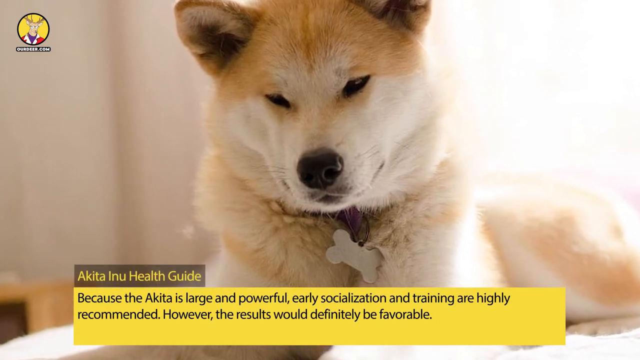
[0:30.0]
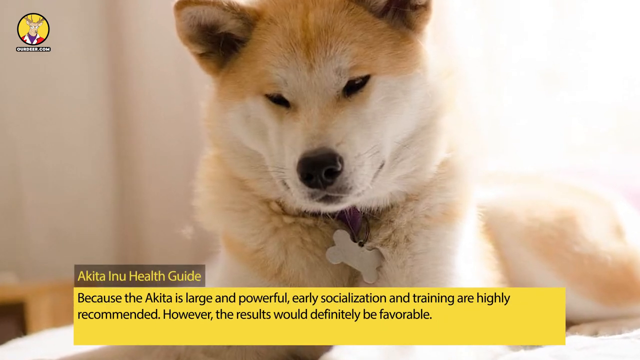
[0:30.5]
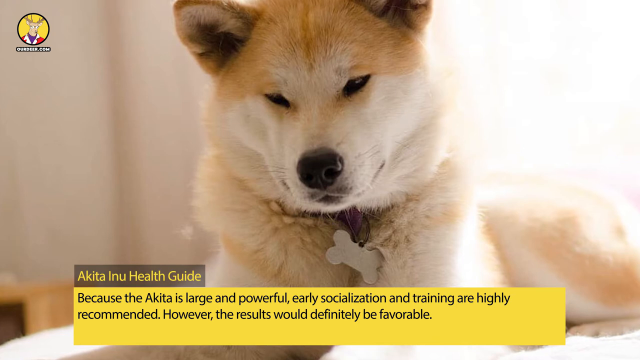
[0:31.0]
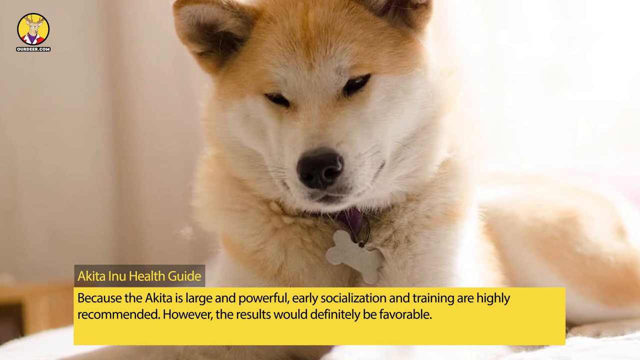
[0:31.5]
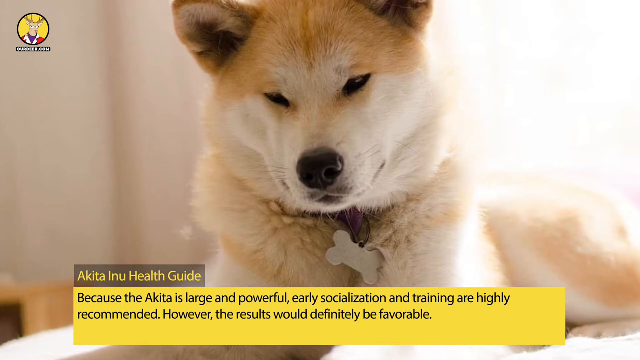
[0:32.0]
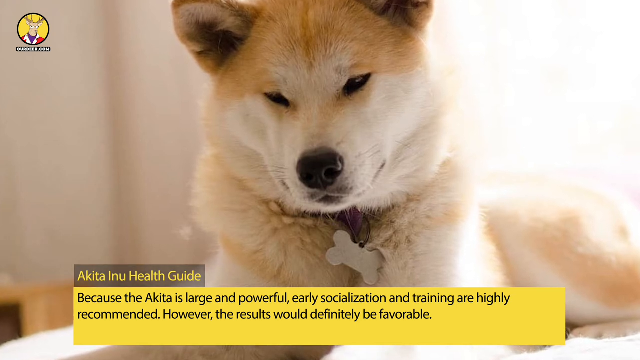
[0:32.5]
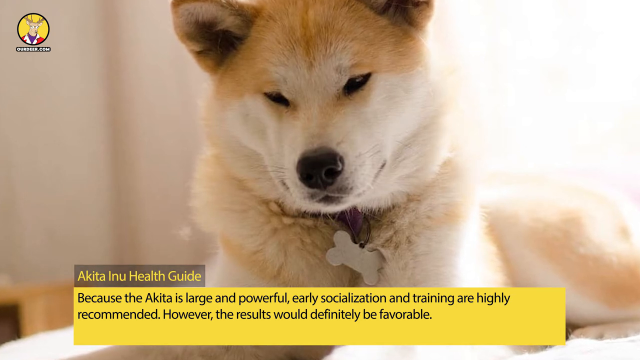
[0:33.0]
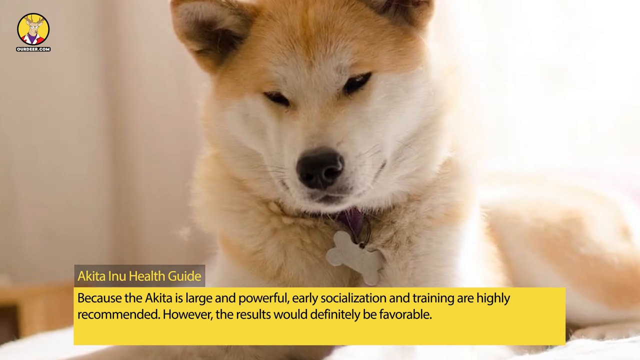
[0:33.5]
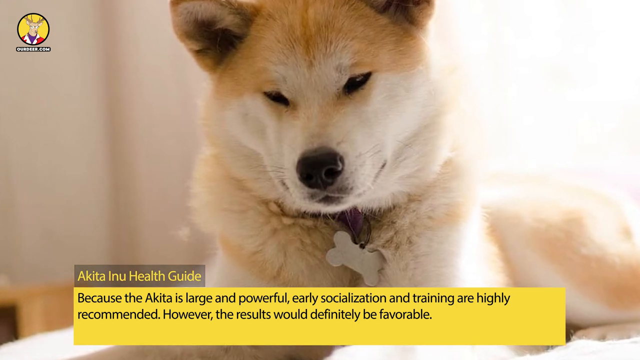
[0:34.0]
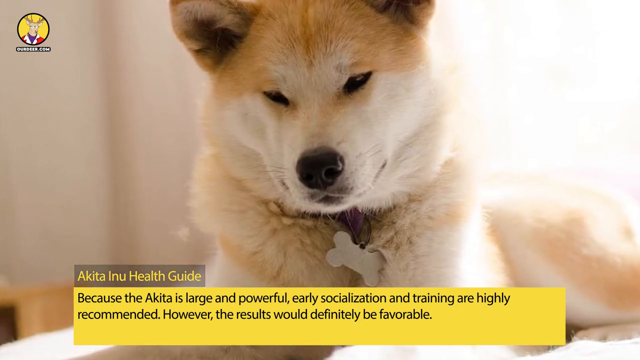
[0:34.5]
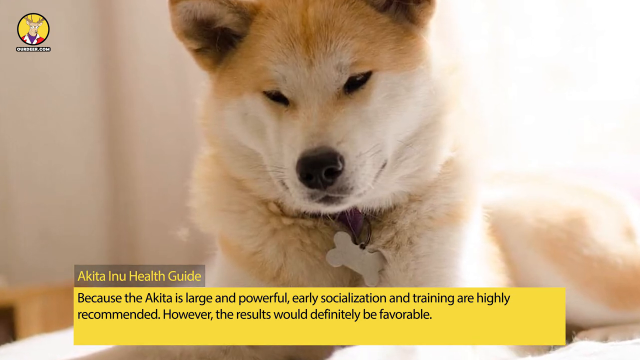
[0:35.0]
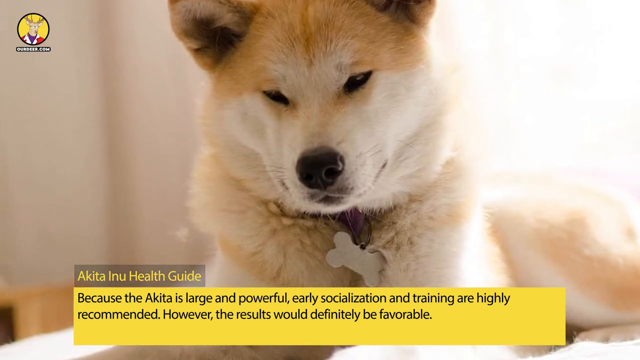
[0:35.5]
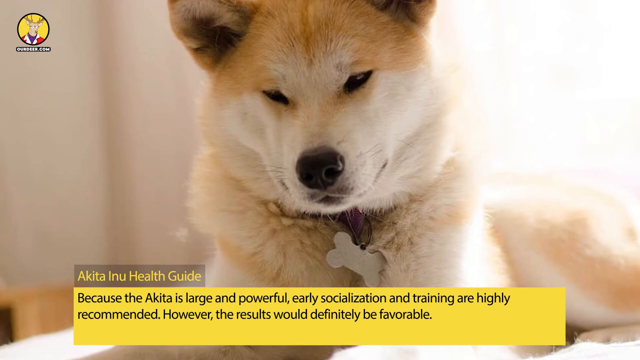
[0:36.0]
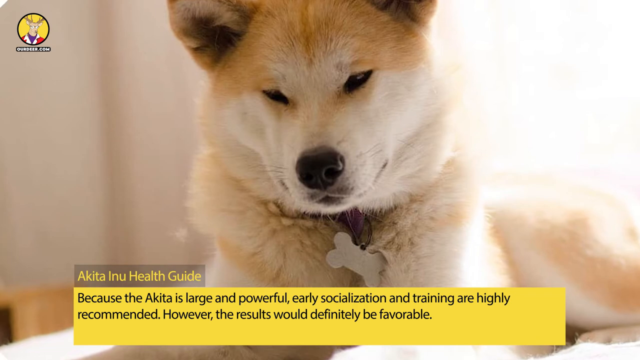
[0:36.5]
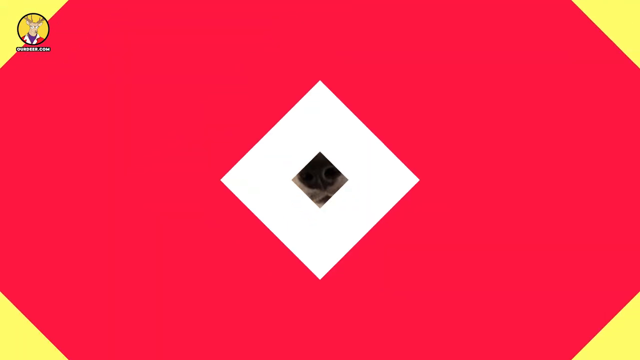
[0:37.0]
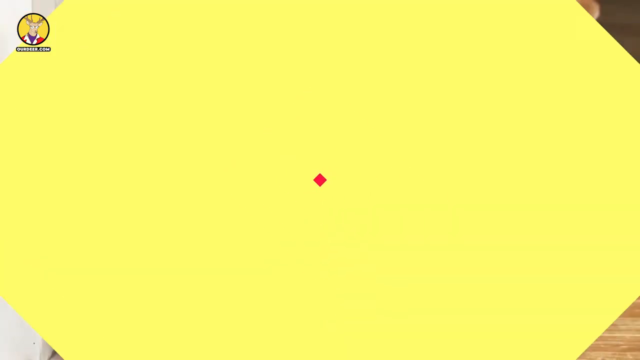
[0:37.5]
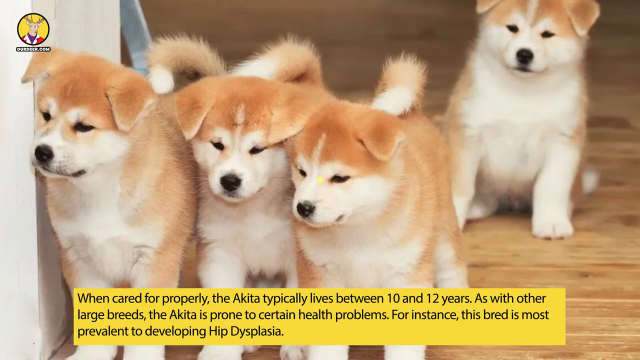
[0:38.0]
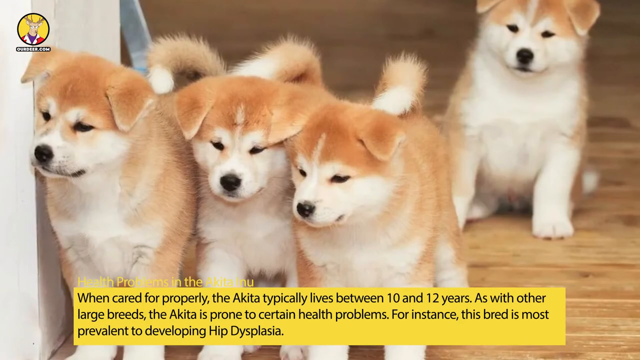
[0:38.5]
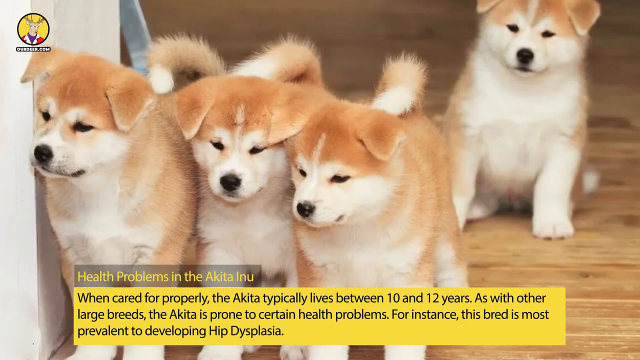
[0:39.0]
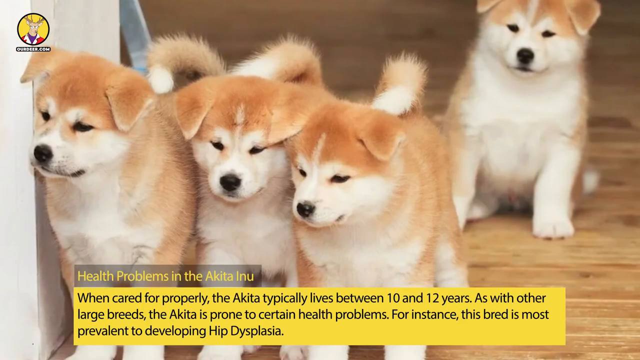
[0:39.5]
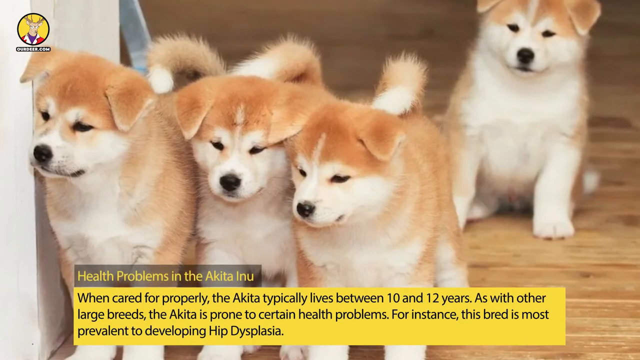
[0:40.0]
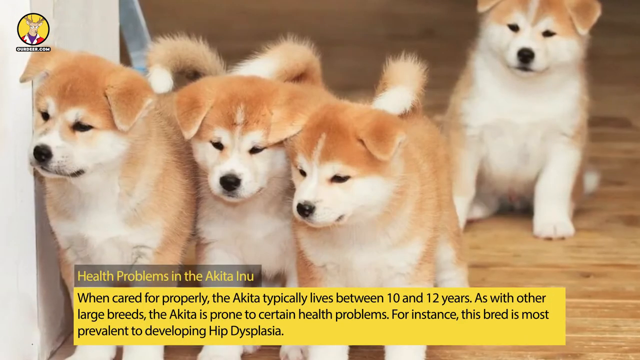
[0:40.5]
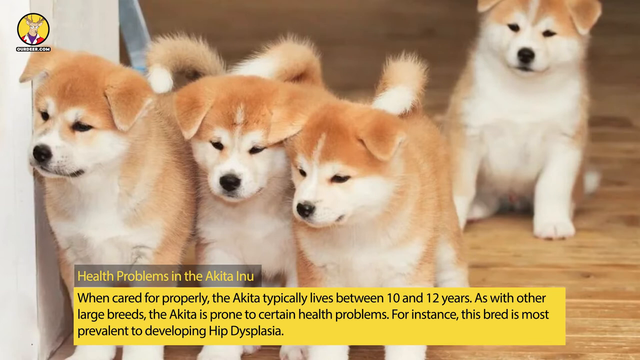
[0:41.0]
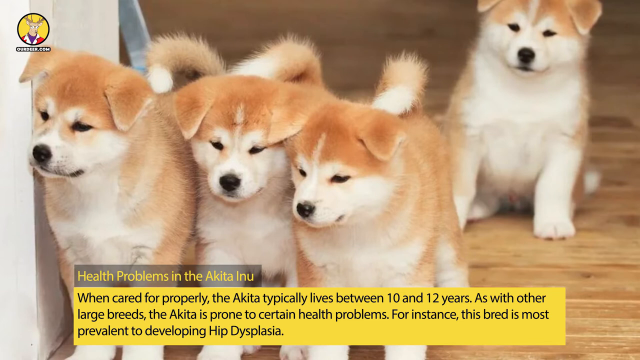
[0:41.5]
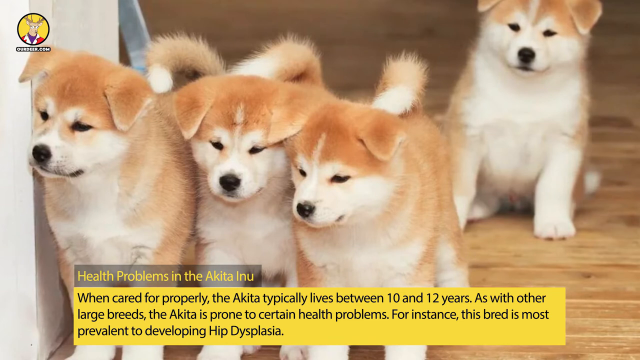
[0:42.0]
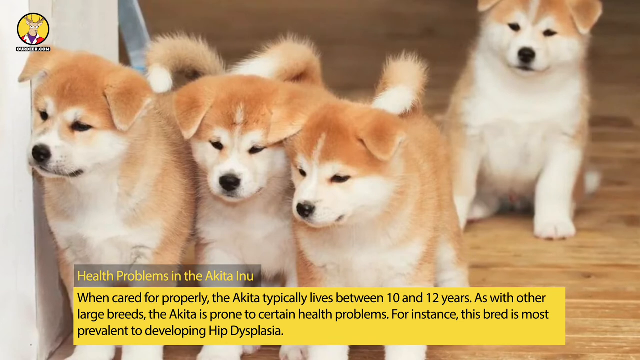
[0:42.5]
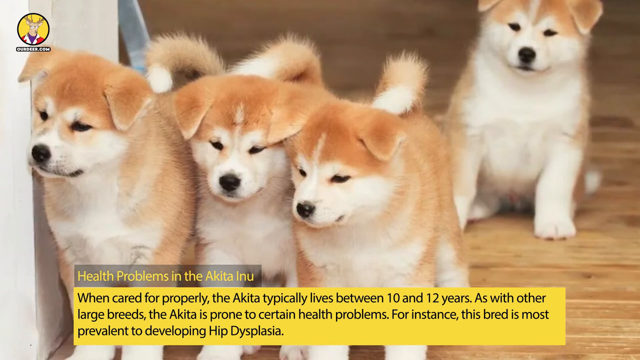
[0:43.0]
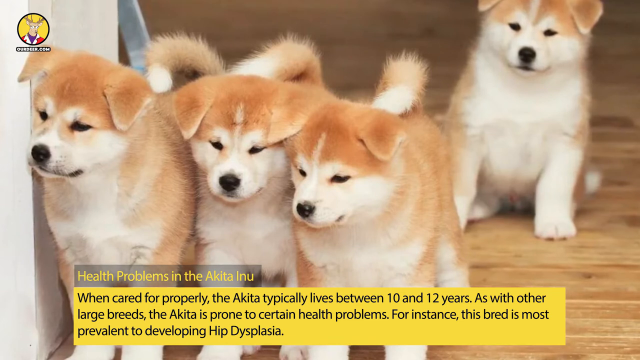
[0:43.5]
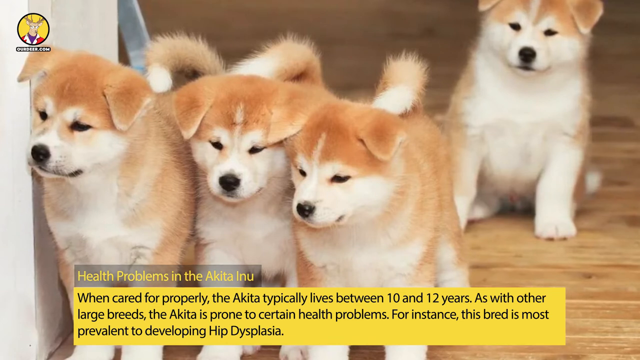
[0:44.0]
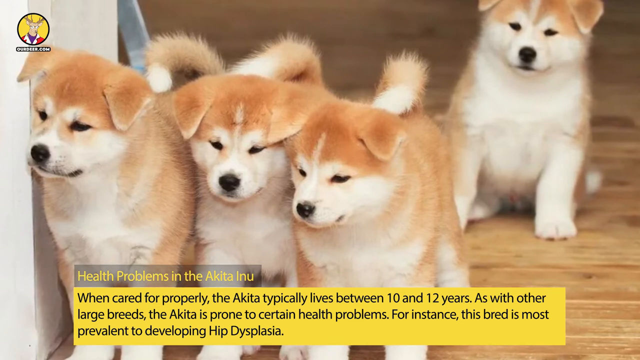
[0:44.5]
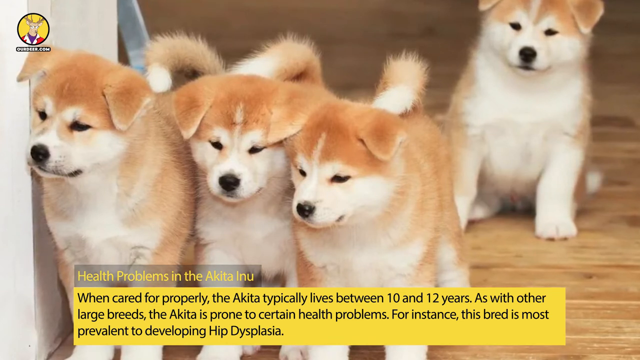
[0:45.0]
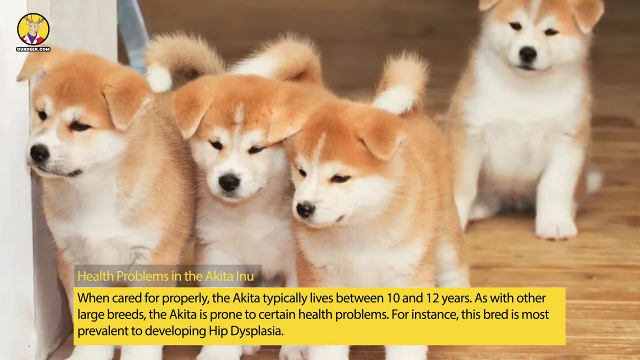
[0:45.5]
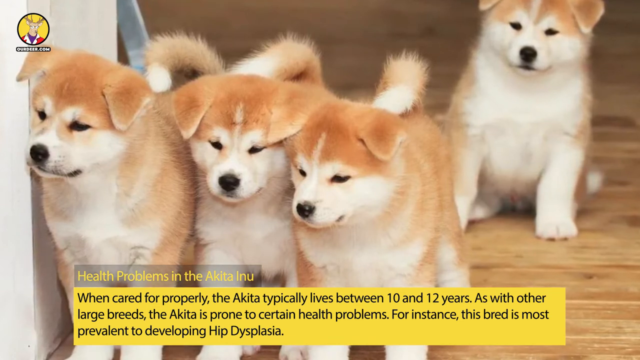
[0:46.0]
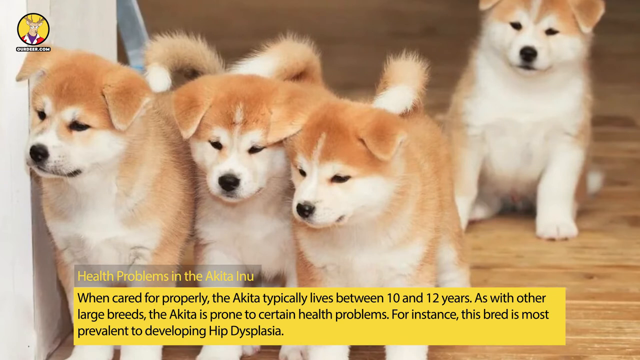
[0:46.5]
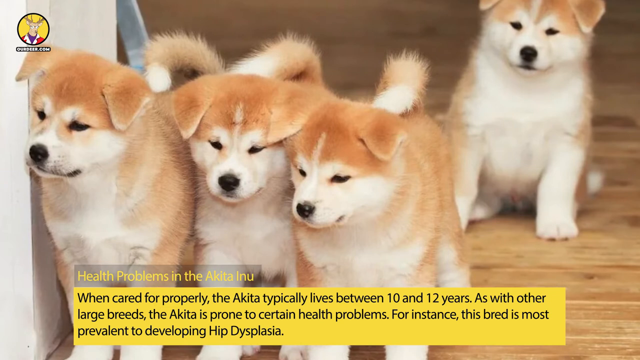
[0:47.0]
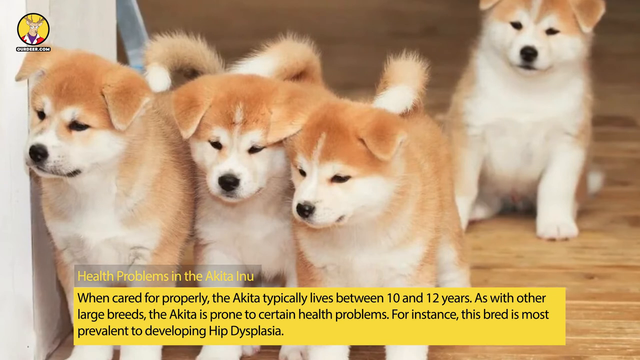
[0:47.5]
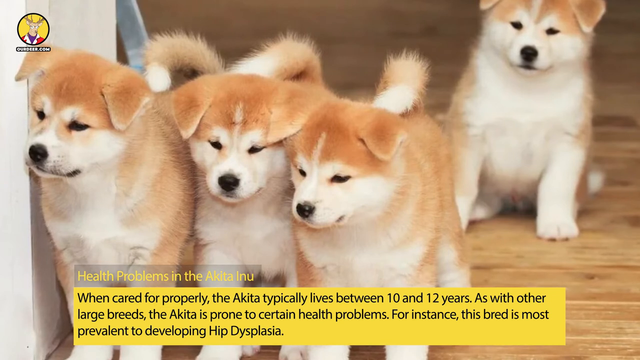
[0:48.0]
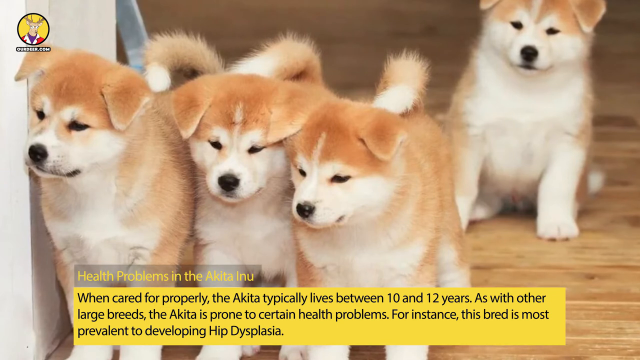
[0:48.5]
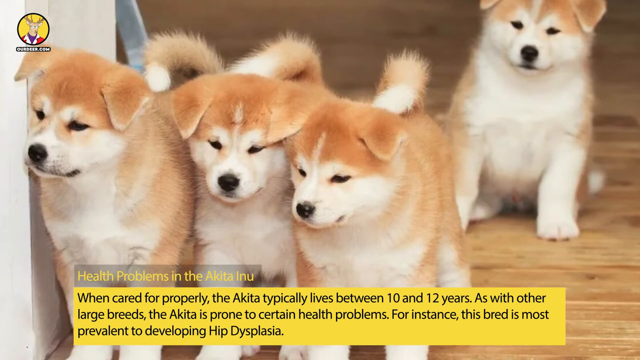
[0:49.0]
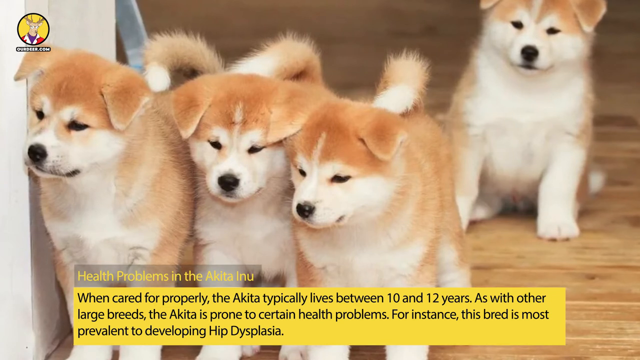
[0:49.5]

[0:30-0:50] The picture of the dog is on screen with the text "Akita Inu health guide" and "because the Akita is large and powerful early socialization and training are highly recommended however the results could definitely be favorable", and the view zooms in slowly on the dog. The screen changes through a number of colors and goes to a picture of a group of puppies, which are brown and white like the big dog. The text reads "when cared for properly the Akita typically lives between 10 and 12 years as with other large breeds the Akita is prone to certain health problems for instance this breed is most prevalent to develop" hip dysplasia. Up in the left corner is the circle with the yellow and the deer in it.